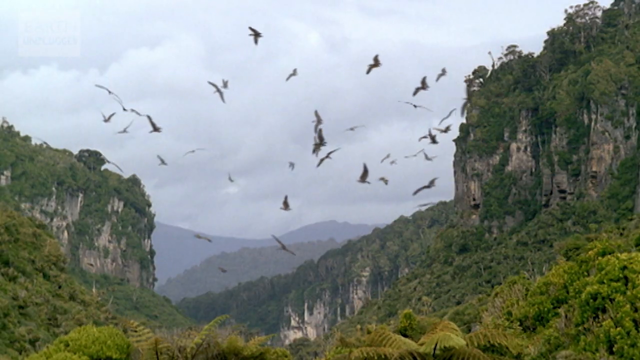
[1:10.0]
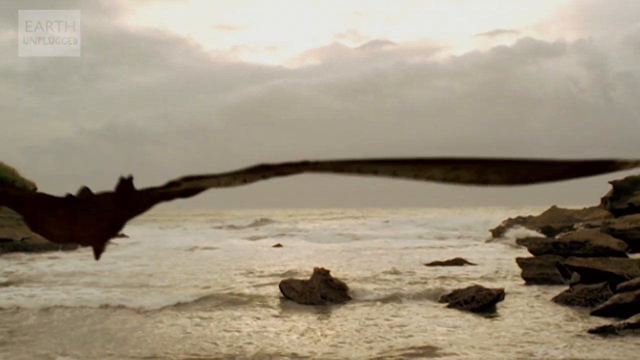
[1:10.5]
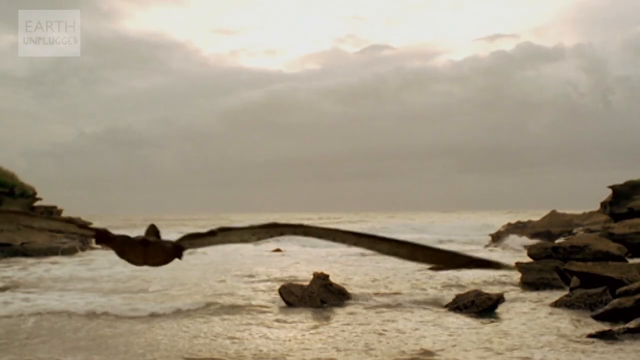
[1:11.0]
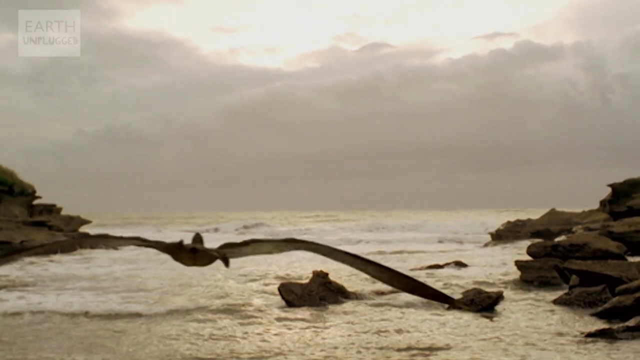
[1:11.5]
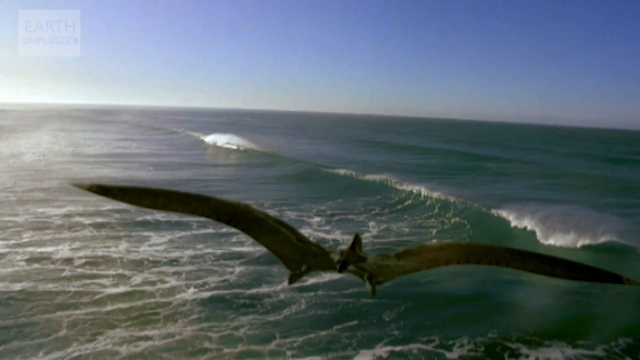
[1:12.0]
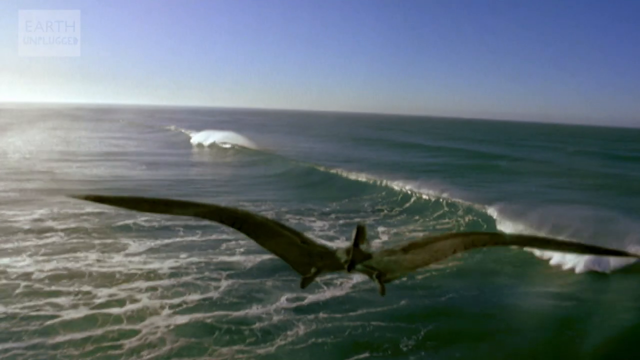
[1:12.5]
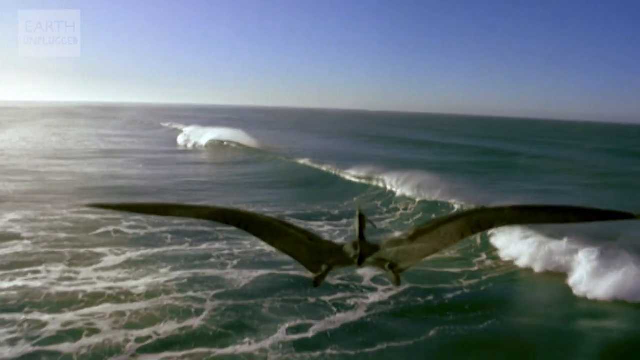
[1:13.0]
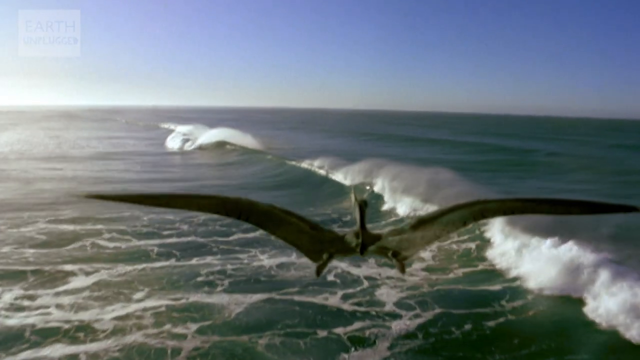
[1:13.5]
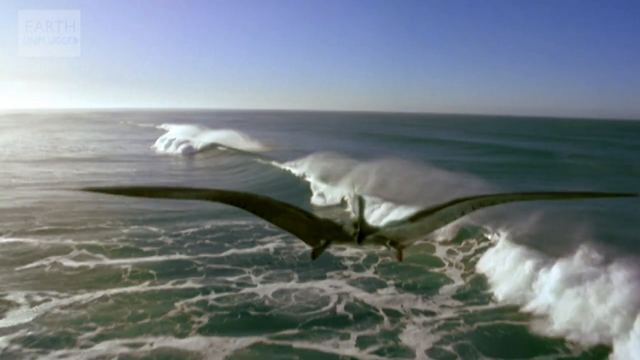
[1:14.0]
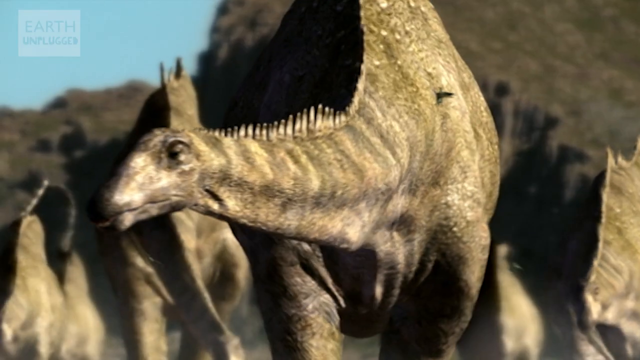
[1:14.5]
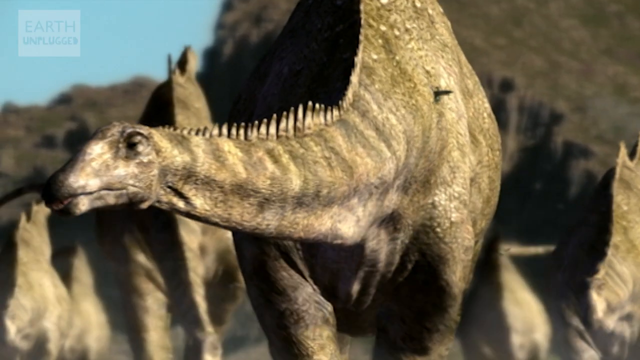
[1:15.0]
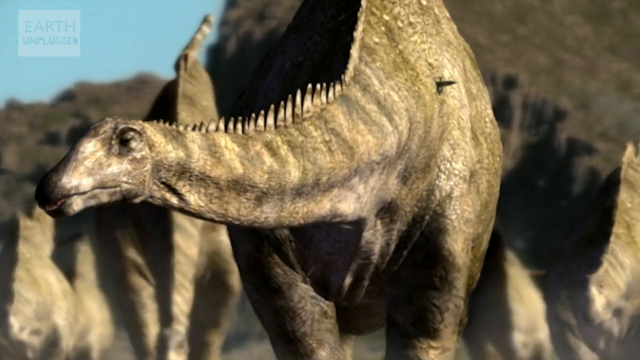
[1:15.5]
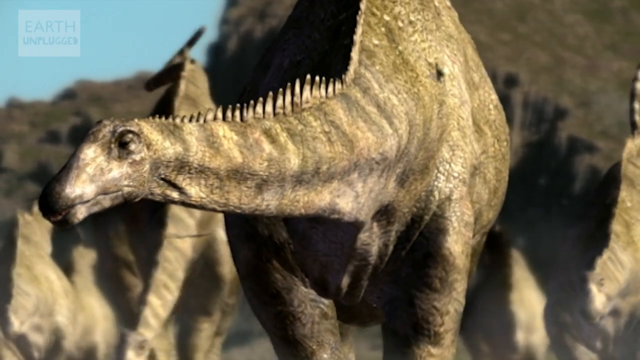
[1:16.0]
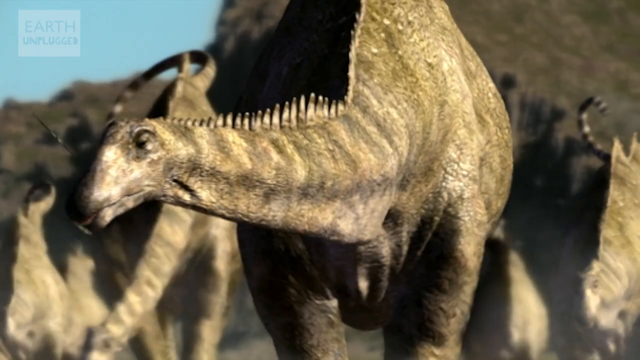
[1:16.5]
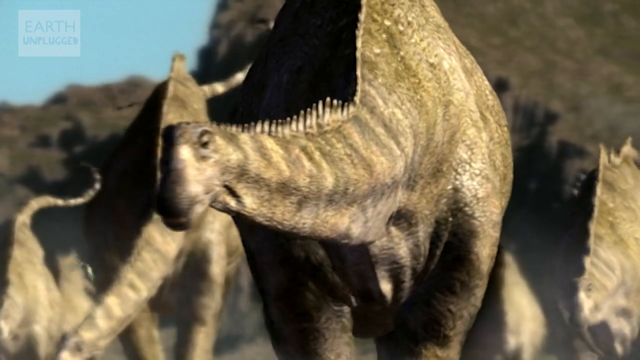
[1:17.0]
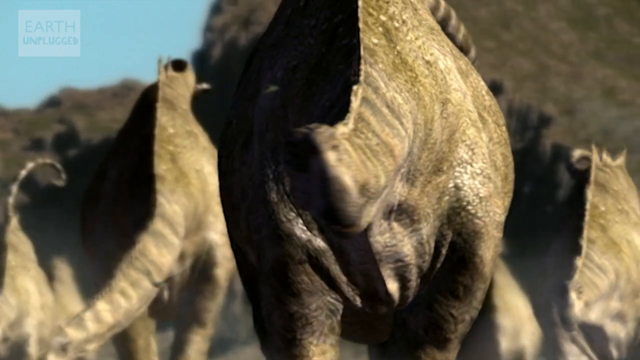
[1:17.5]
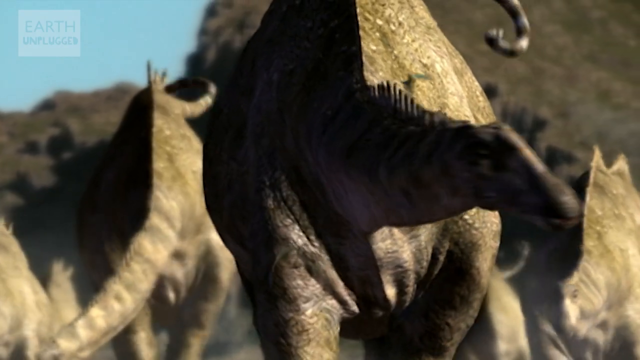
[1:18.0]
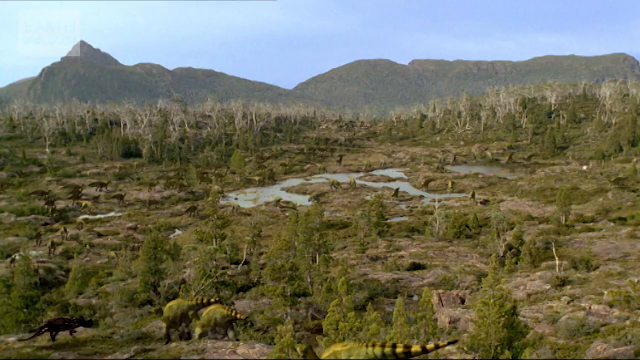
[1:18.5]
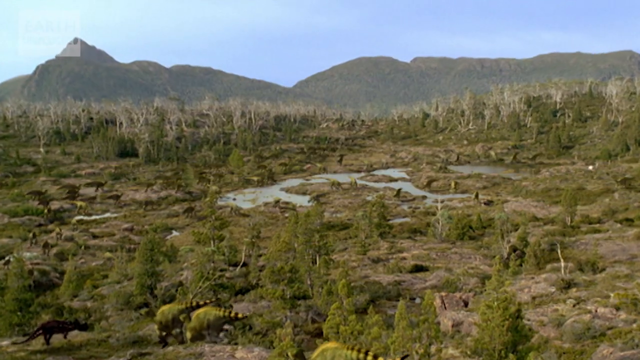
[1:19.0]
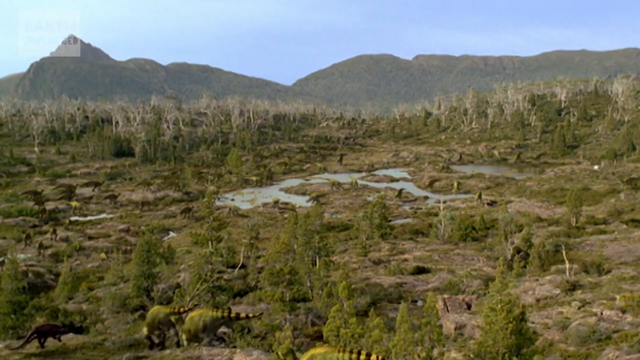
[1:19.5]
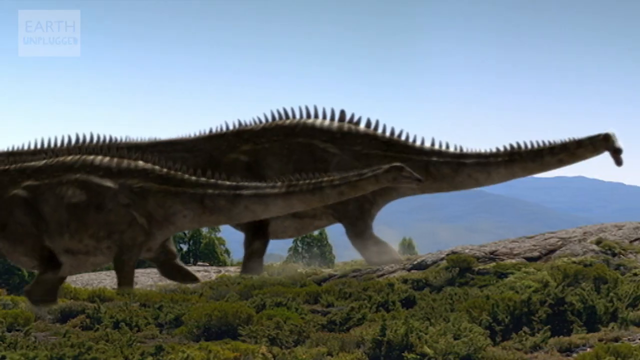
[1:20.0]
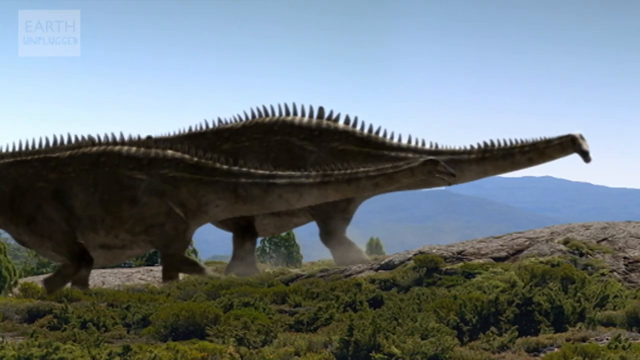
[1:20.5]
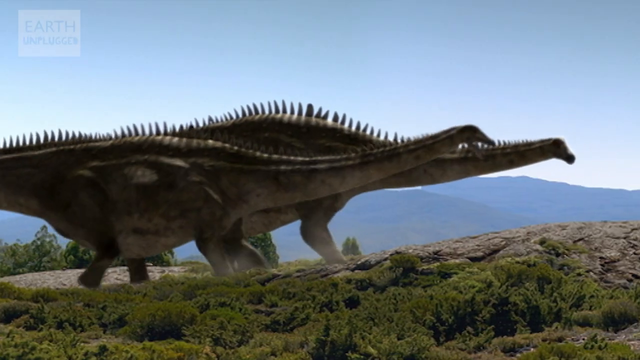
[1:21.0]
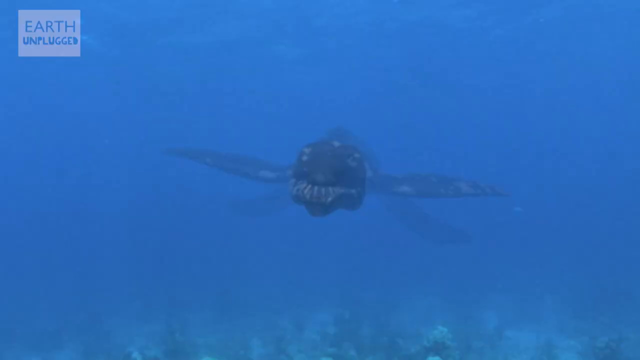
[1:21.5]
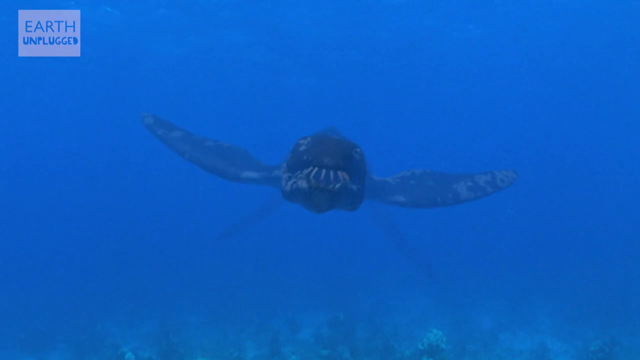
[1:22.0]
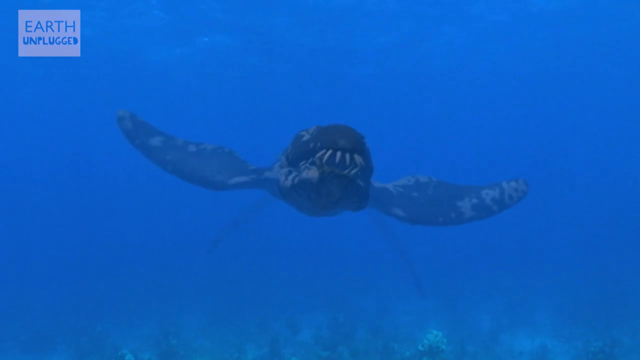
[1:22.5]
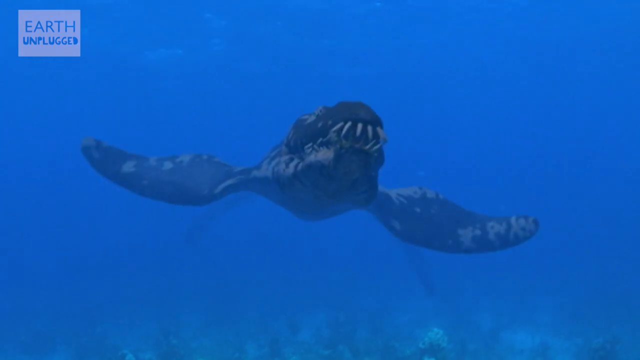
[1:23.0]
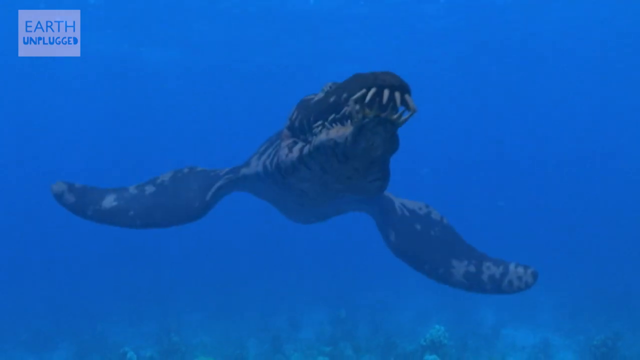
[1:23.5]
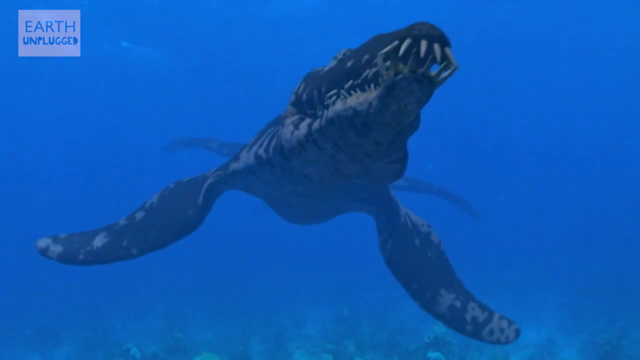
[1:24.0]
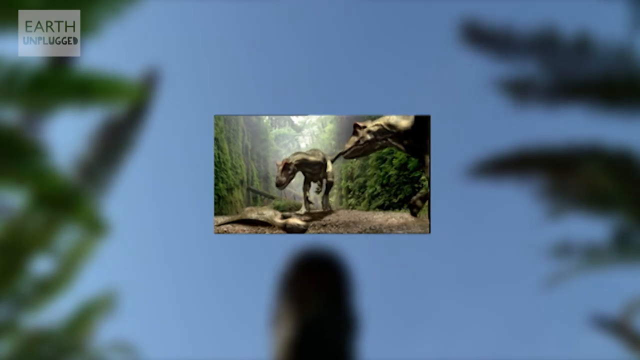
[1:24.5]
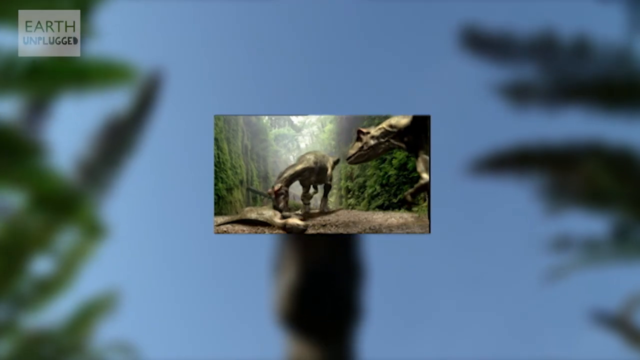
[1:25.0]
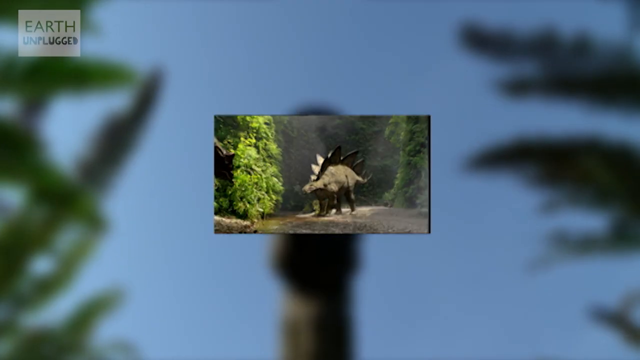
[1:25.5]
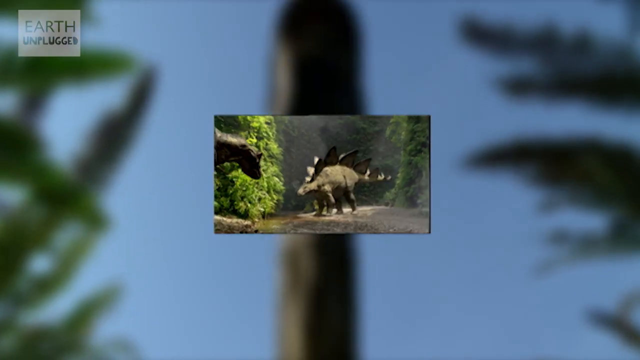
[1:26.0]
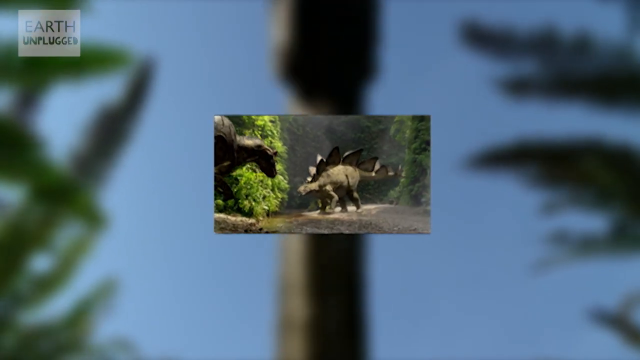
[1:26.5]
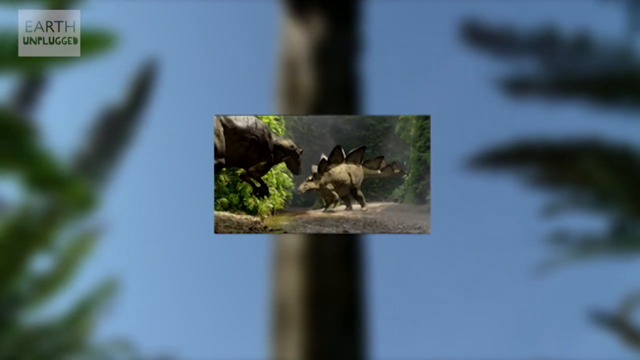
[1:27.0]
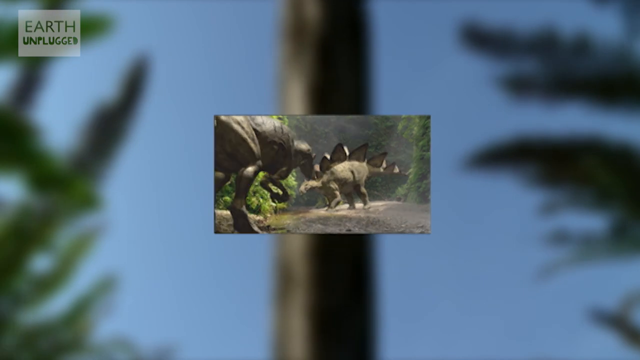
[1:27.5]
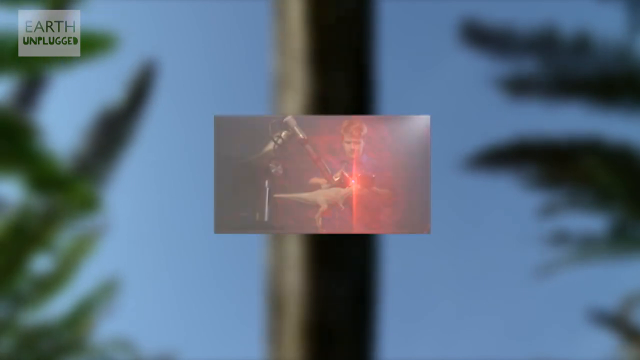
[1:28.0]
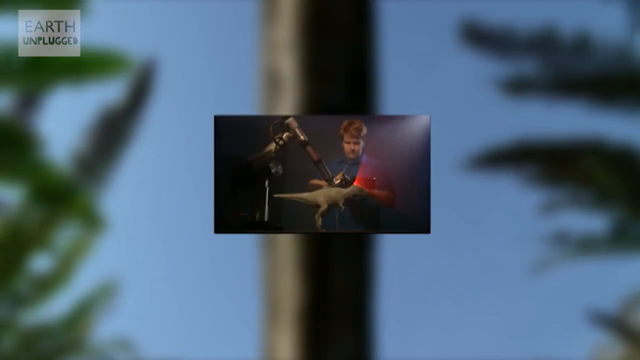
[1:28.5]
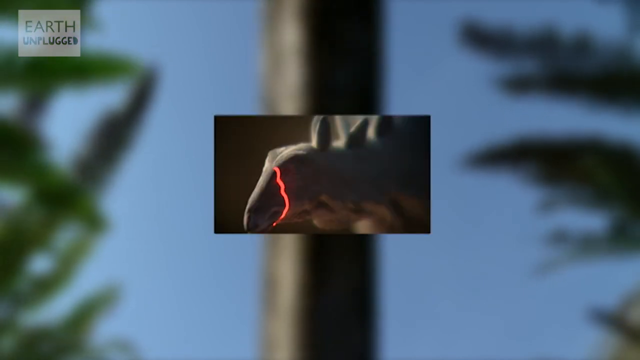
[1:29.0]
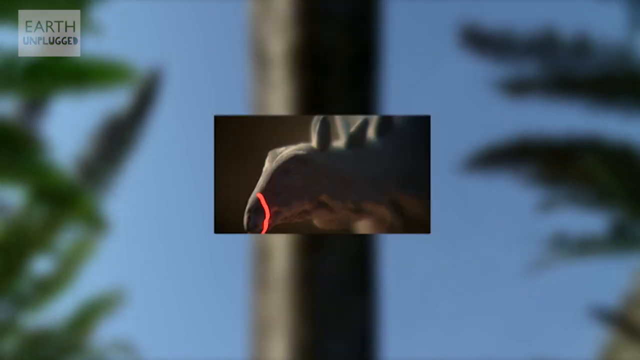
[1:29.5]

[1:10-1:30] A pterodactyl flies over a small body of water with rocks, then appears to fly over an ocean, with heavy waves crashing and a blue sky as the backdrop. A dinosaur walks around in a group of about three or four other dinosaurs, then another group of three or four dinosaurs walks. The shot focuses on two walking dinosaurs. A bird on the first group of walking dinosaurs flies away. Then a whale-like dinosaur with really huge teeth swims at the bottom of the ocean. A T-Rex and a Stegosaurus come across one another. Then a gentleman with some kind of laser passes the laser over the form of a Stegosaurus, apparently creating something. "earth unplugged" appears in the corner in a gray box, and on the bottom right there is apparently "BBC Earth" in a brown circle.